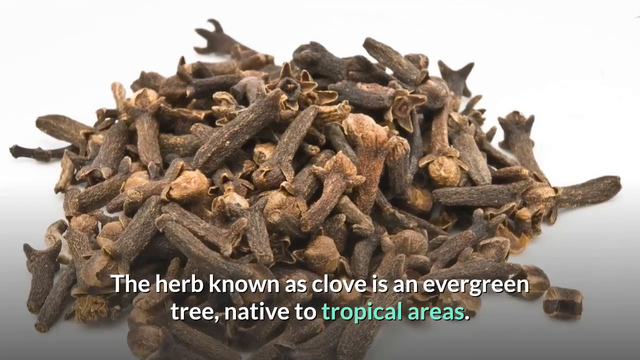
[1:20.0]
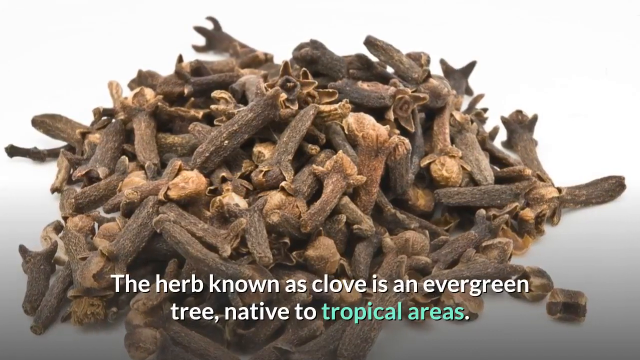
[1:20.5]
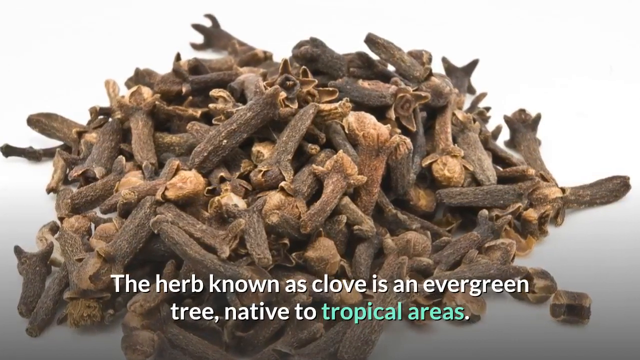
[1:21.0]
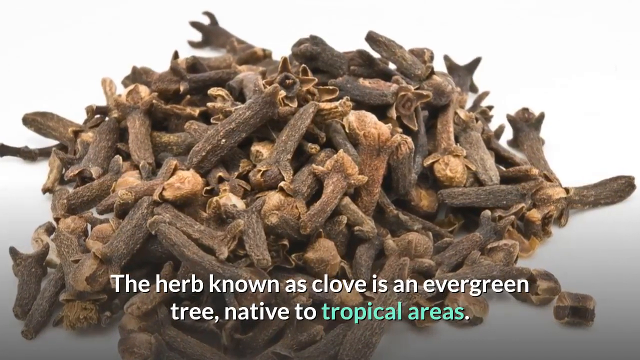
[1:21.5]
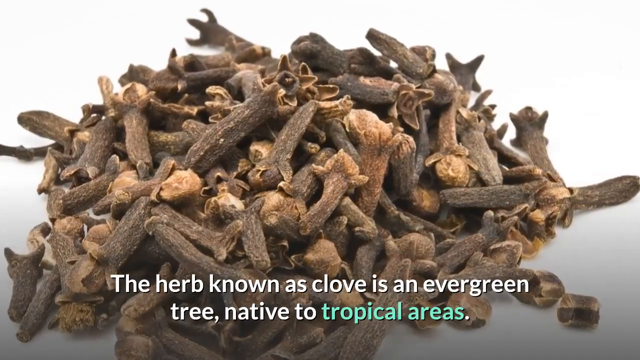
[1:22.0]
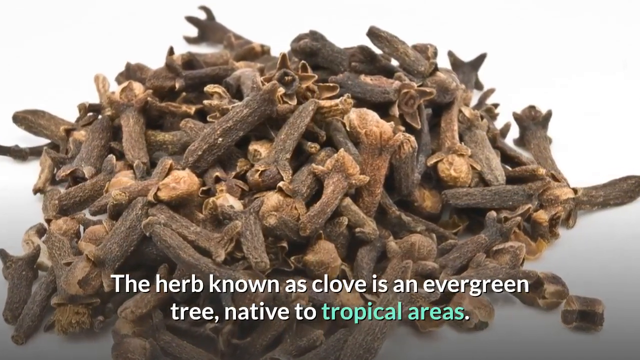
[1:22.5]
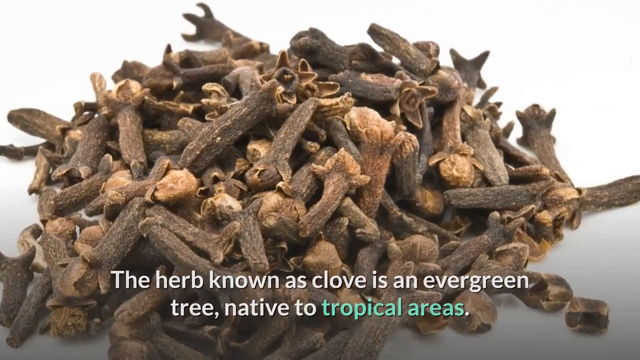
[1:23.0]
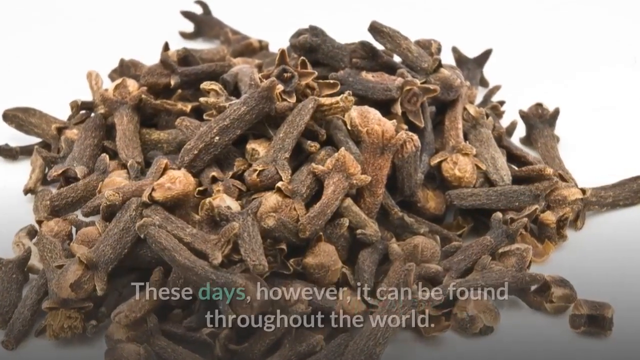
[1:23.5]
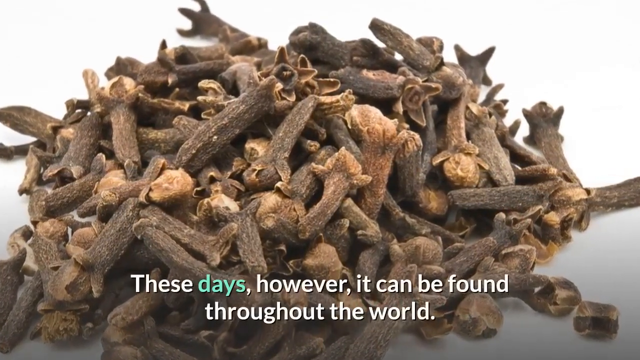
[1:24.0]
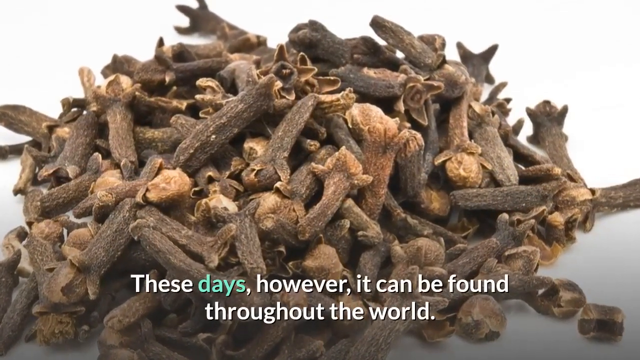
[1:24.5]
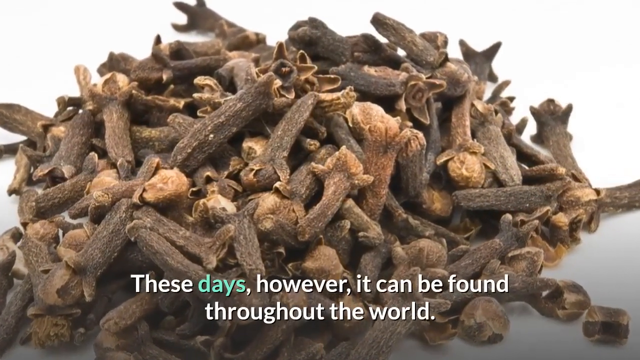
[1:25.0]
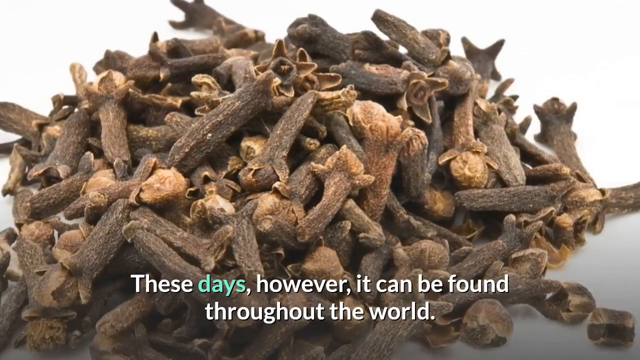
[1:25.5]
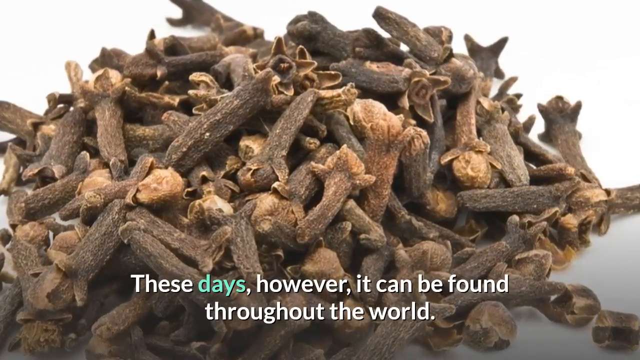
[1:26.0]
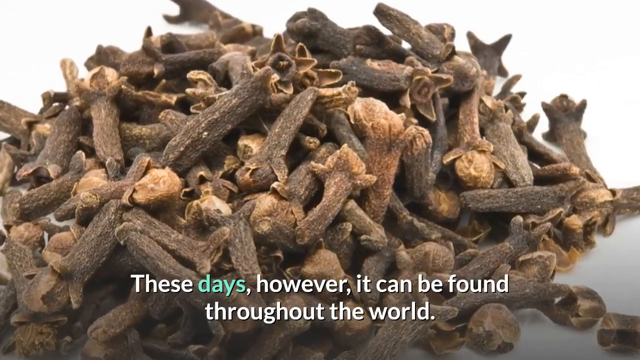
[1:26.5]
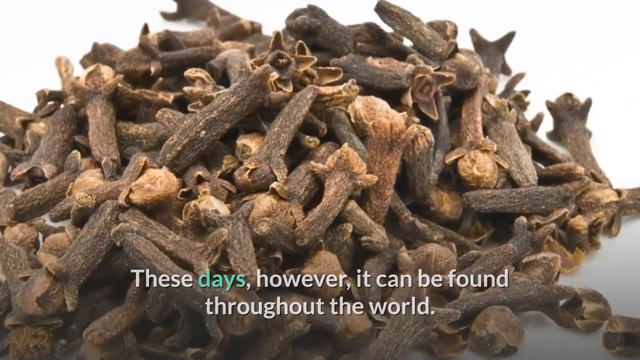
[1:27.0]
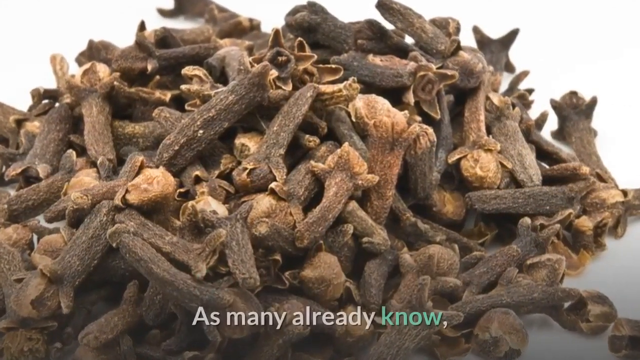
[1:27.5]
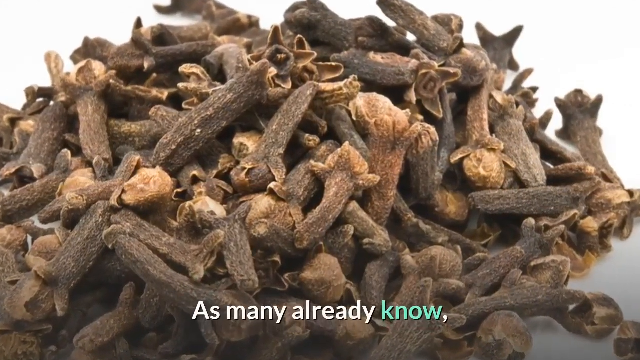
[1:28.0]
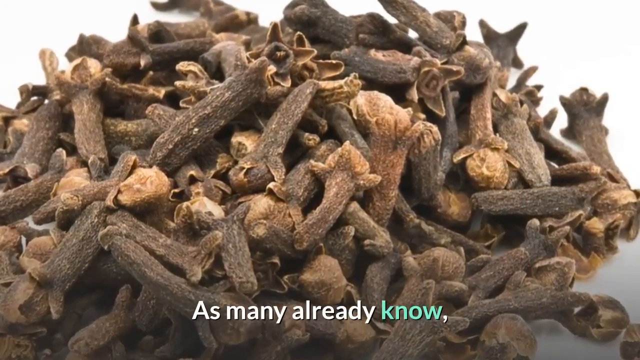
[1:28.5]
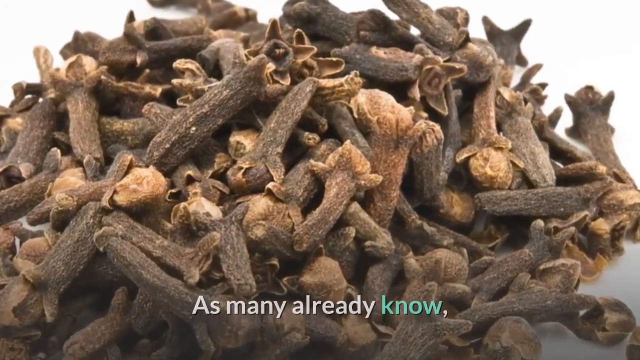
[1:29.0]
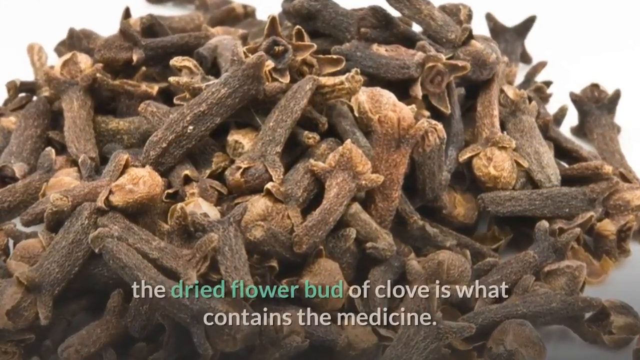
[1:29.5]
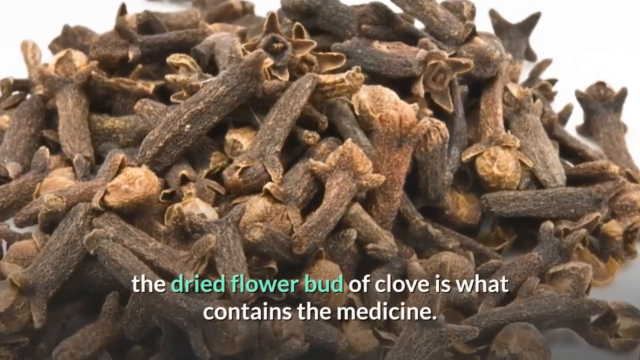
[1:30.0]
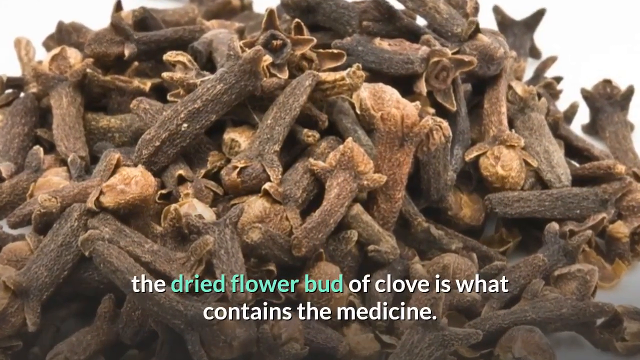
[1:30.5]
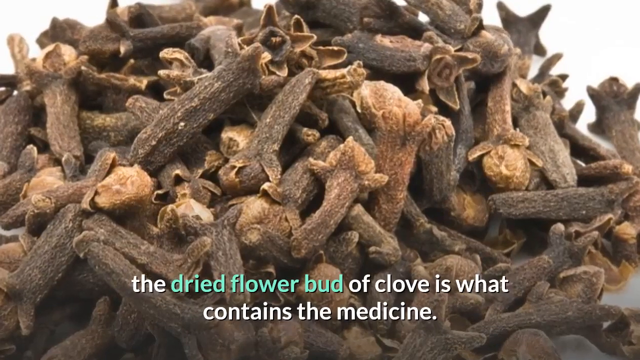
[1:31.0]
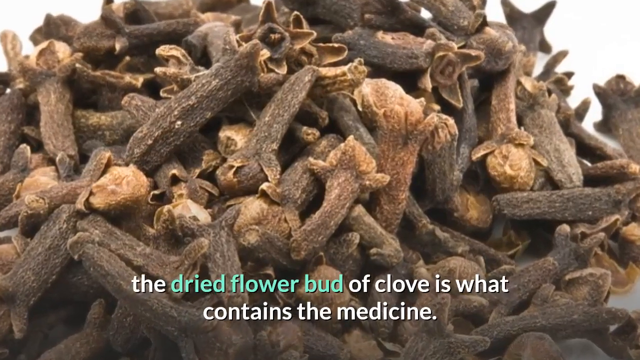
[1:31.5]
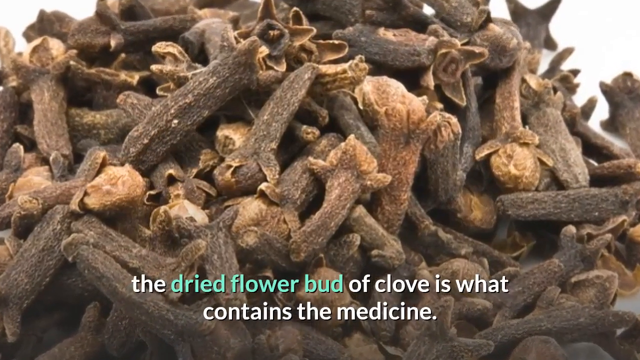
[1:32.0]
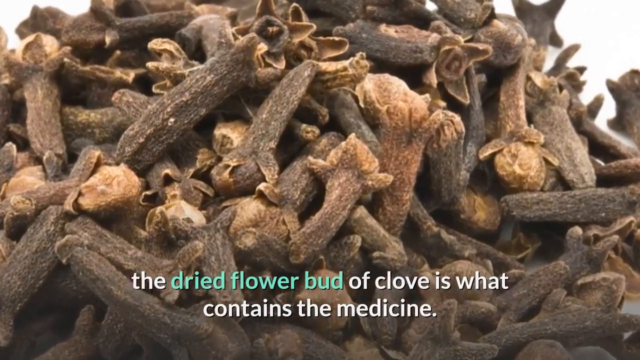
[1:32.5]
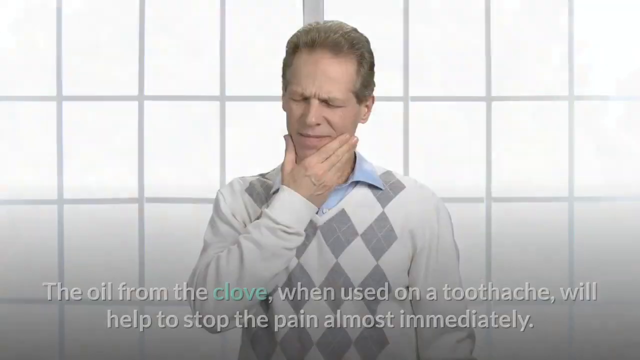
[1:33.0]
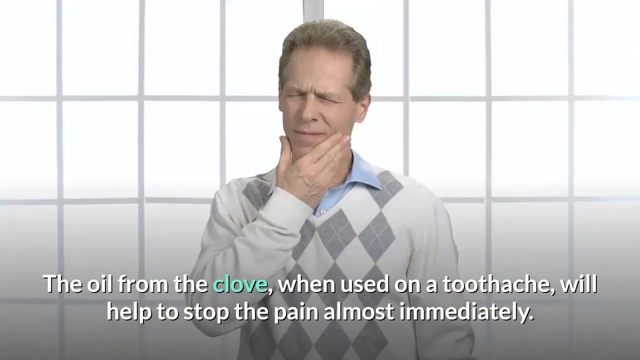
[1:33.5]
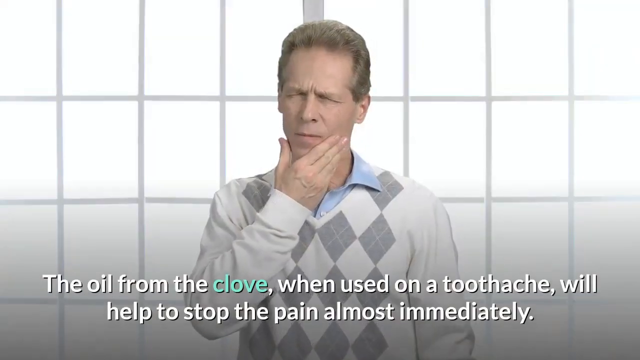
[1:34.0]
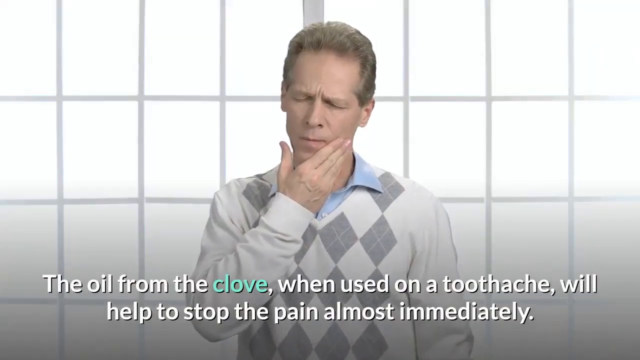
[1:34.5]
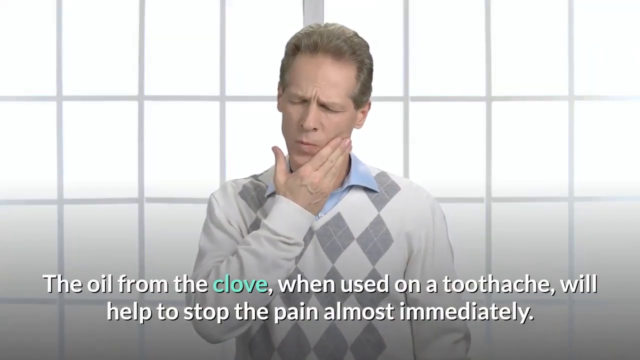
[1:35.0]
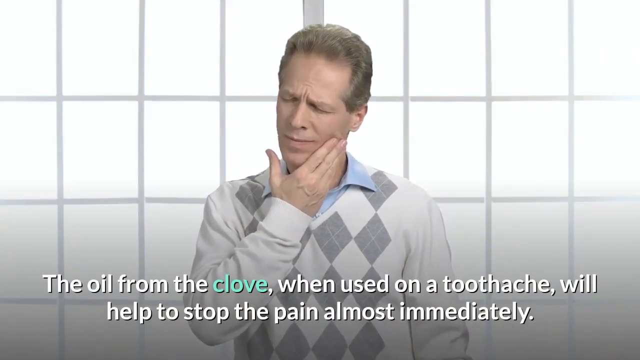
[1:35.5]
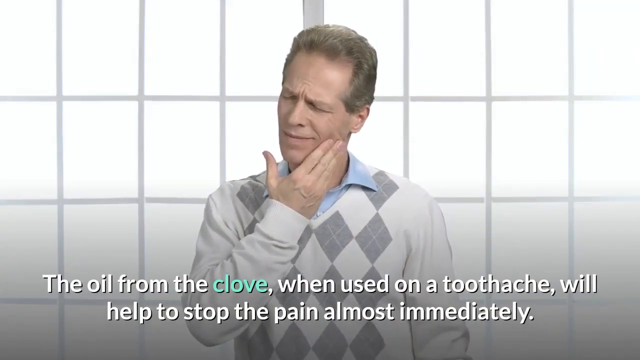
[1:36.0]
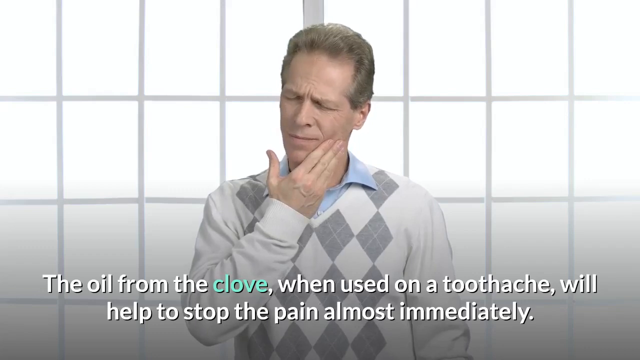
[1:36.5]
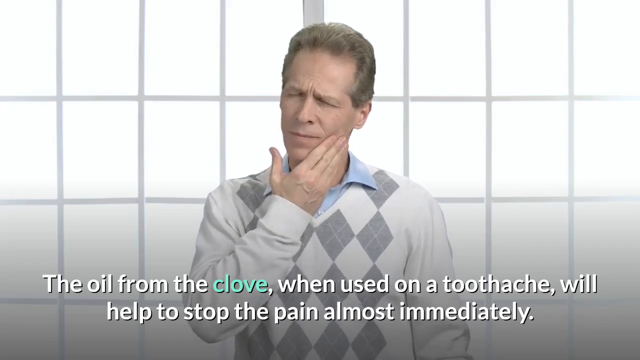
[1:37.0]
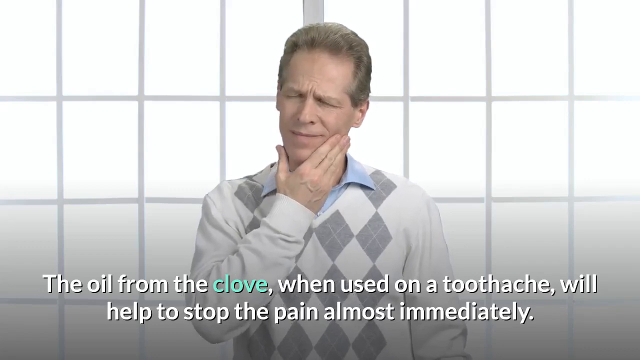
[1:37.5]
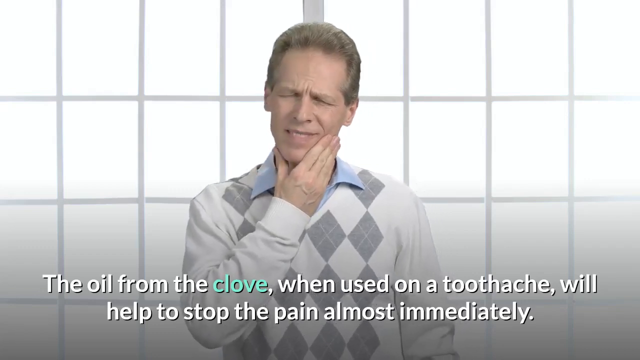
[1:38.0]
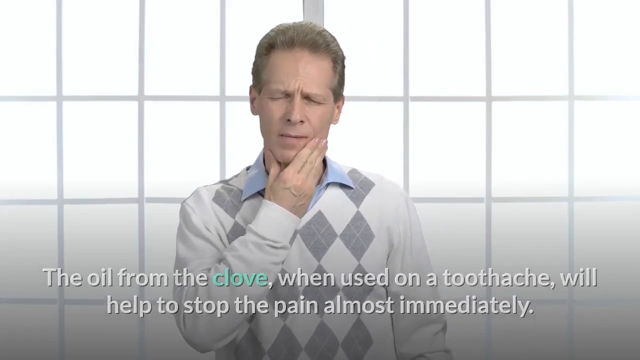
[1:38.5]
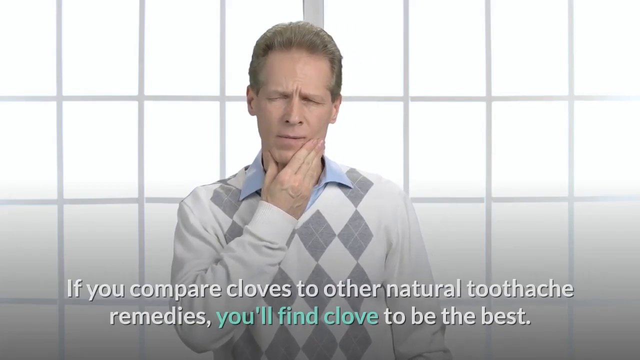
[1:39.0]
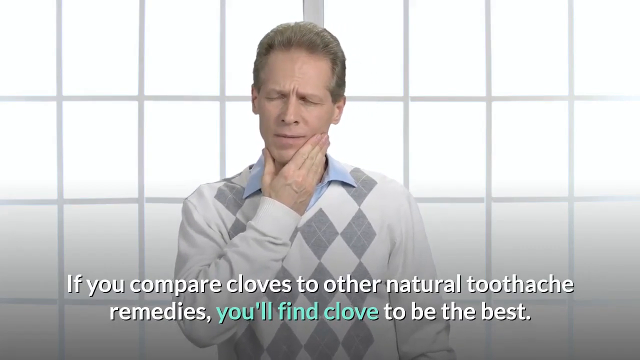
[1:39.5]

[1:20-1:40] A pile of dried cloves lies on a white surface; the cloves look like little tiny sticks with a bloomed end. The text underneath reads "the herb known as clove is an evergreen tree native to tropical areas." The text changes as the camera zooms in, now reading "these days however, it can be found throughout the world. As many already know, the dried flower bud of clove is what contains the medicine." The image changes to a man standing in front of a window pane with his thumb on the right side of his jaw and his four fingers on the left side. His mouth is closed and his eyes are squinted closed. He wears a light blue collared shirt under a white and gray argyle sweater. The text reads "the oil from the clove when used on a toothache will help to stop the pain almost immediately." He rubs his cheek as he makes faces.